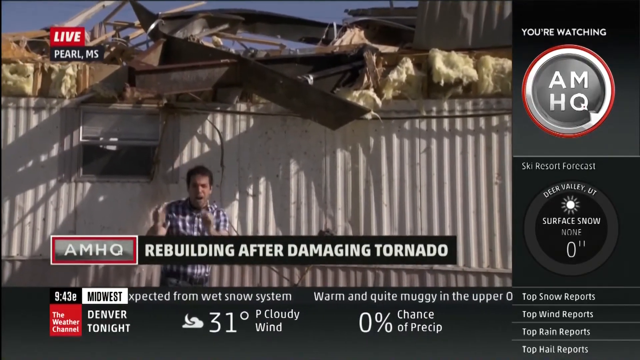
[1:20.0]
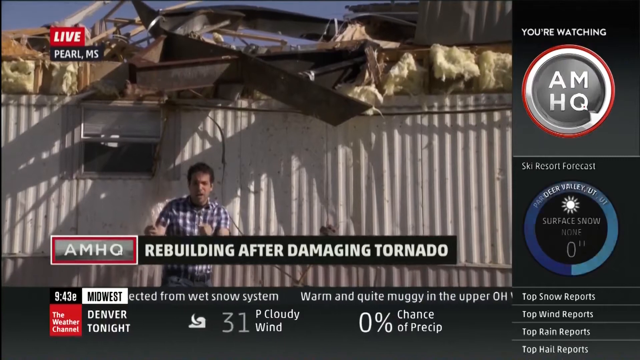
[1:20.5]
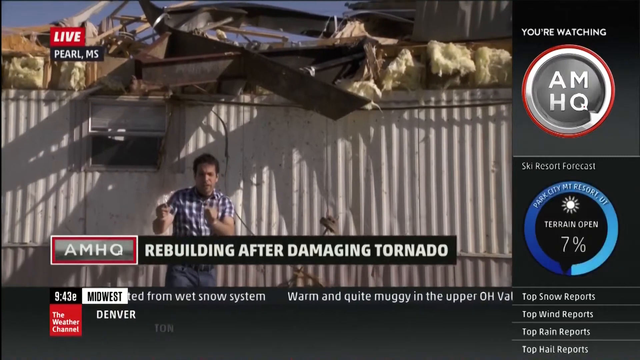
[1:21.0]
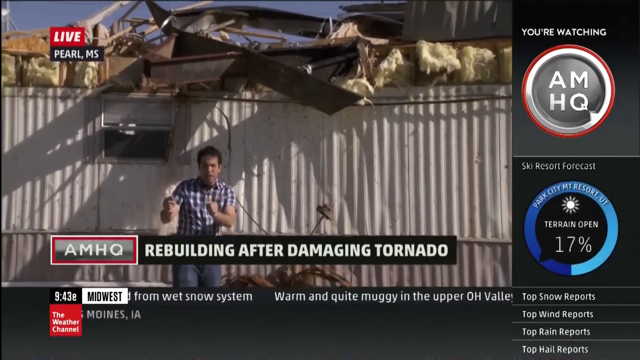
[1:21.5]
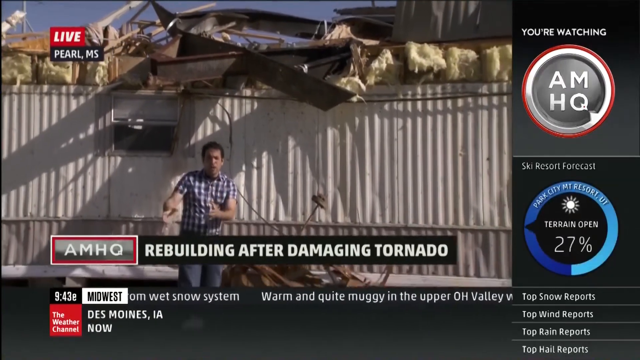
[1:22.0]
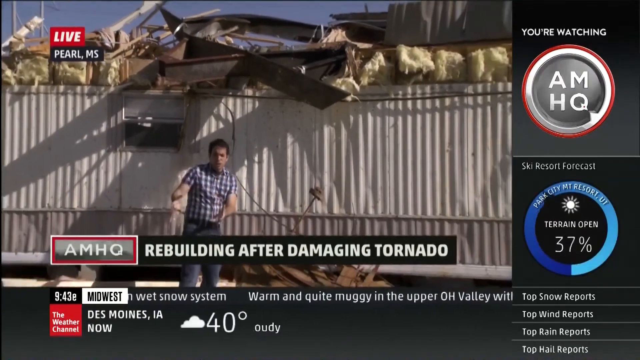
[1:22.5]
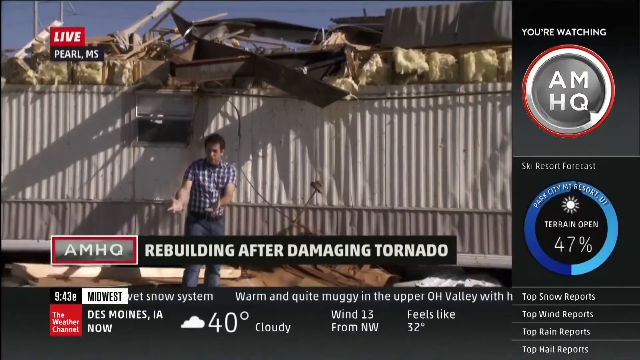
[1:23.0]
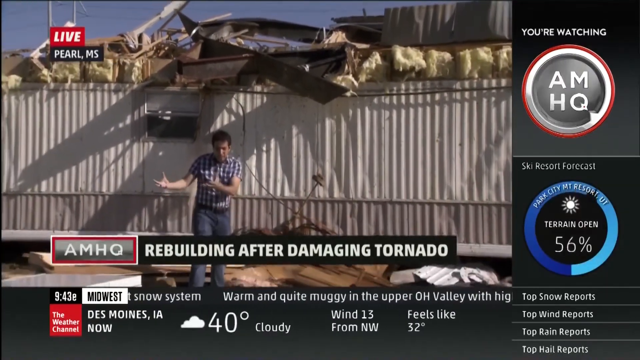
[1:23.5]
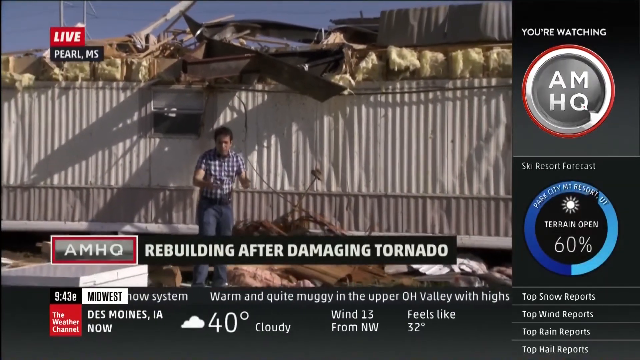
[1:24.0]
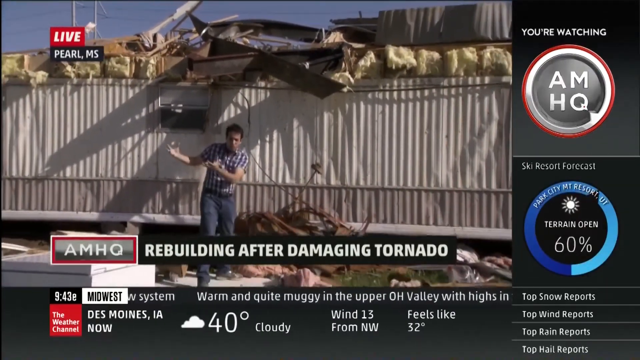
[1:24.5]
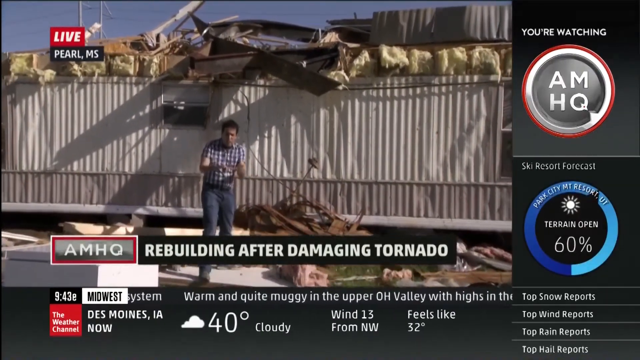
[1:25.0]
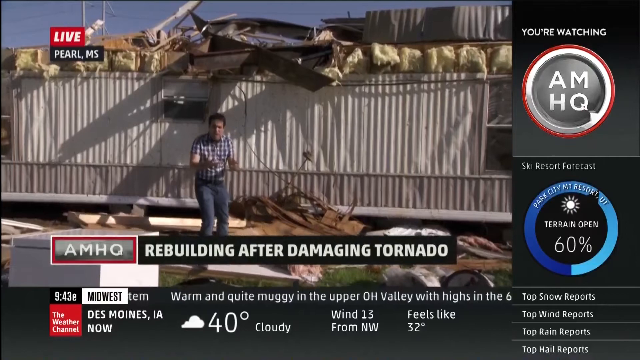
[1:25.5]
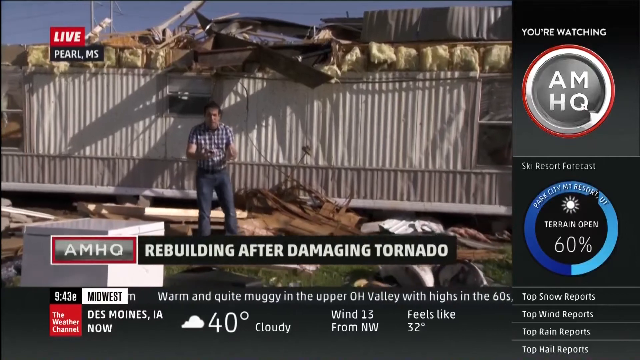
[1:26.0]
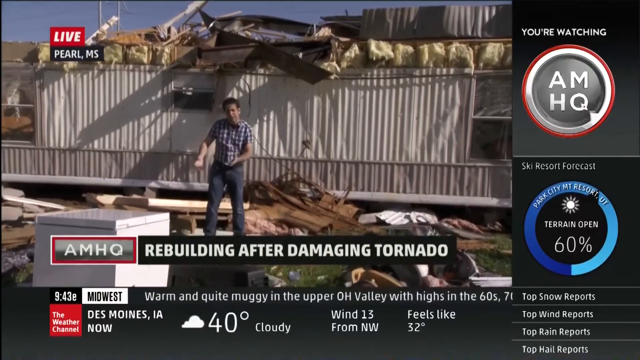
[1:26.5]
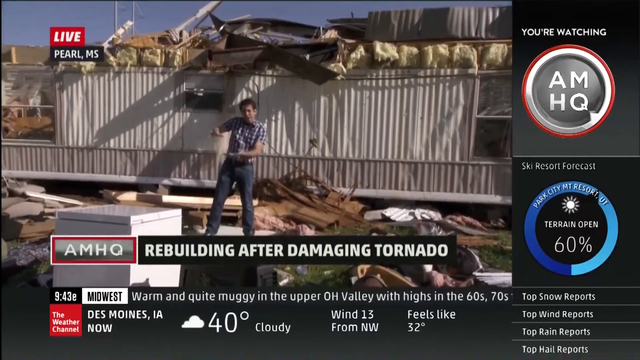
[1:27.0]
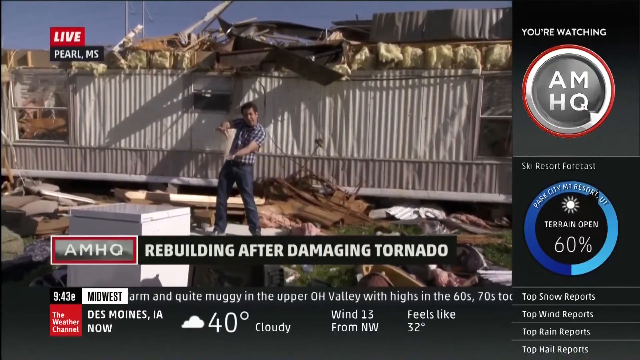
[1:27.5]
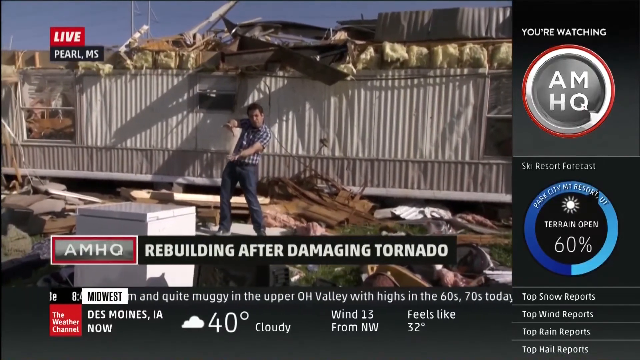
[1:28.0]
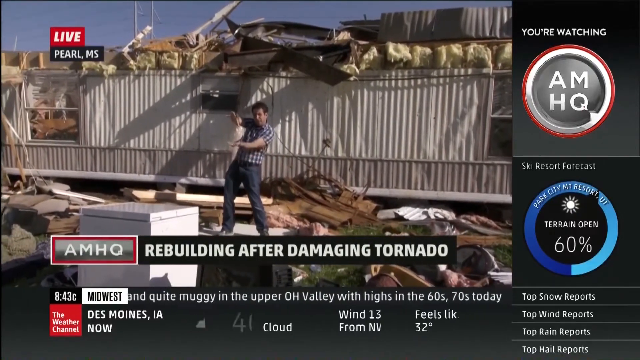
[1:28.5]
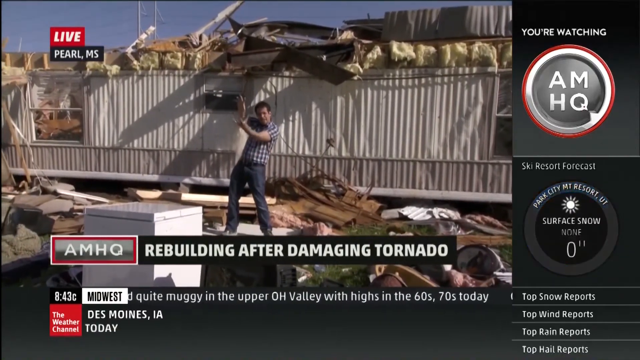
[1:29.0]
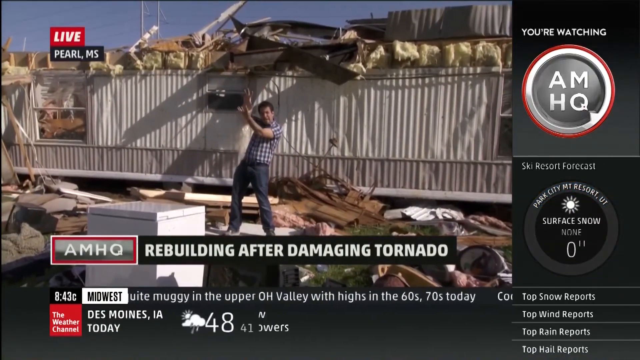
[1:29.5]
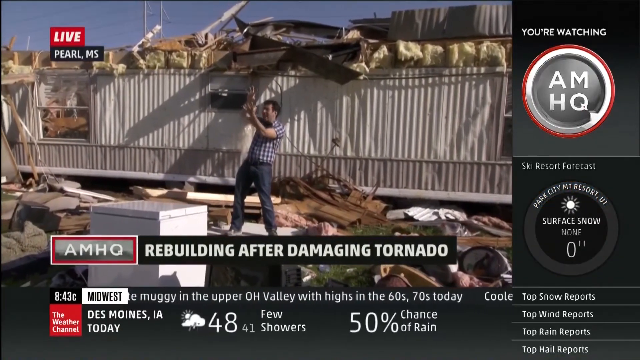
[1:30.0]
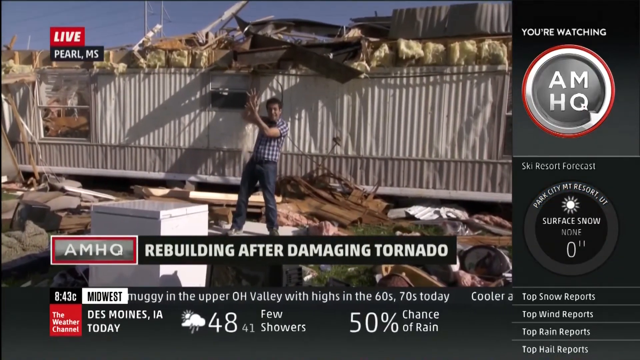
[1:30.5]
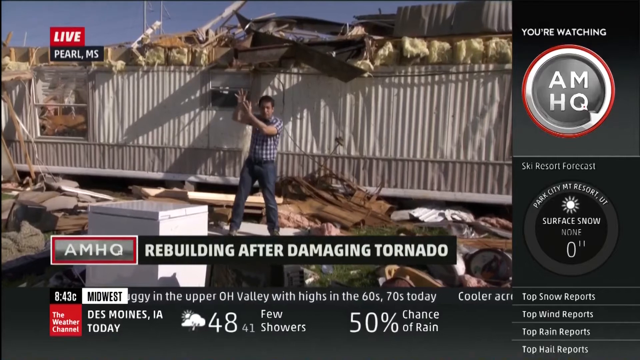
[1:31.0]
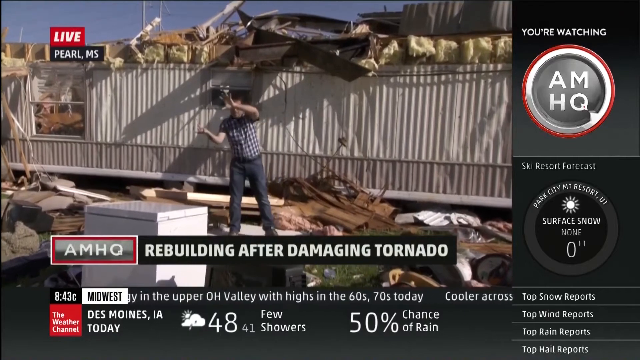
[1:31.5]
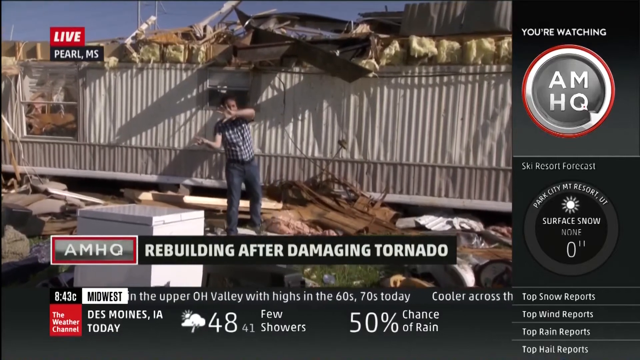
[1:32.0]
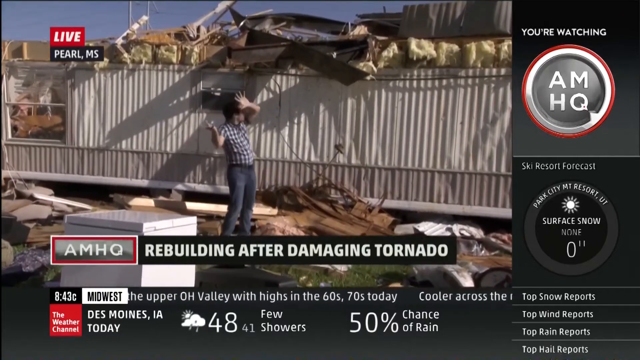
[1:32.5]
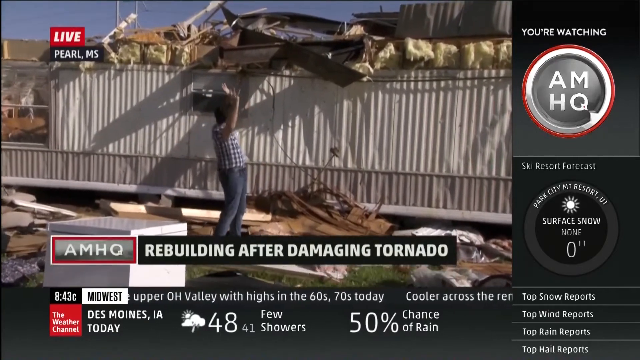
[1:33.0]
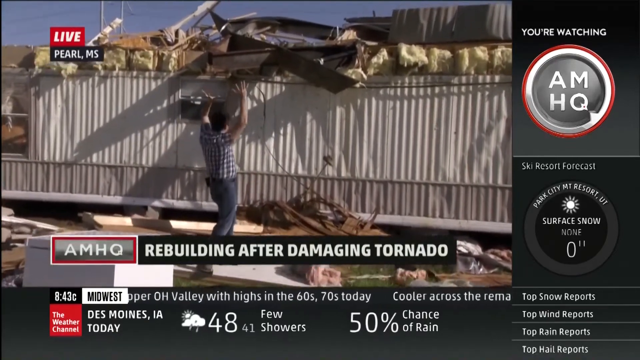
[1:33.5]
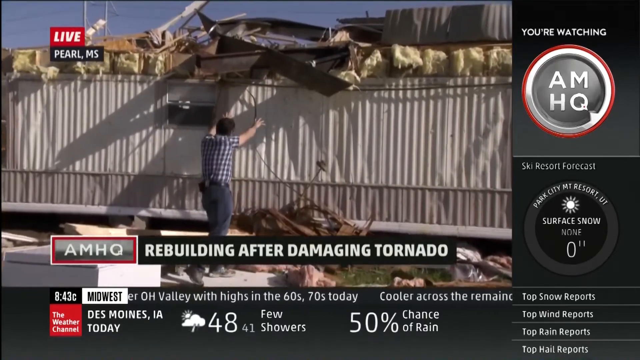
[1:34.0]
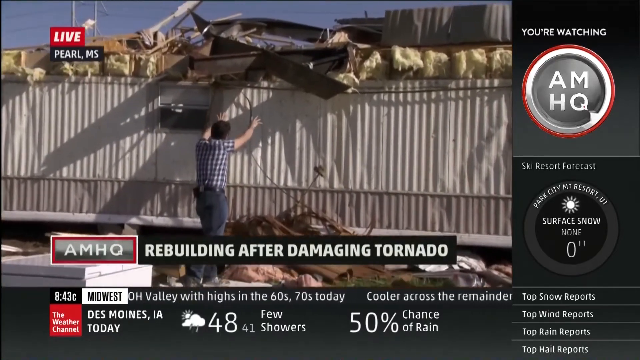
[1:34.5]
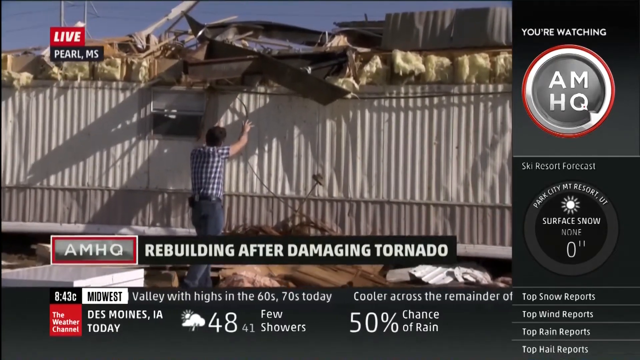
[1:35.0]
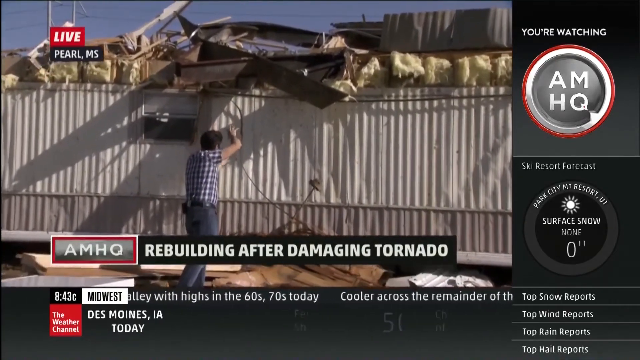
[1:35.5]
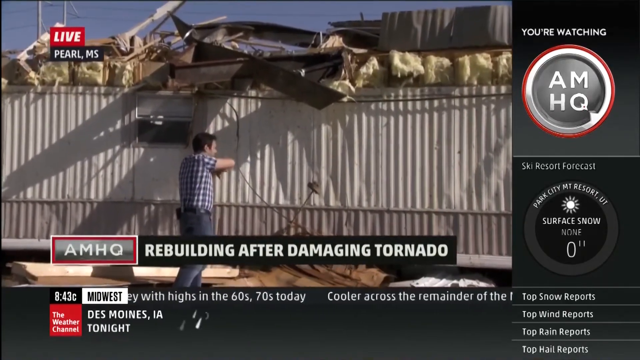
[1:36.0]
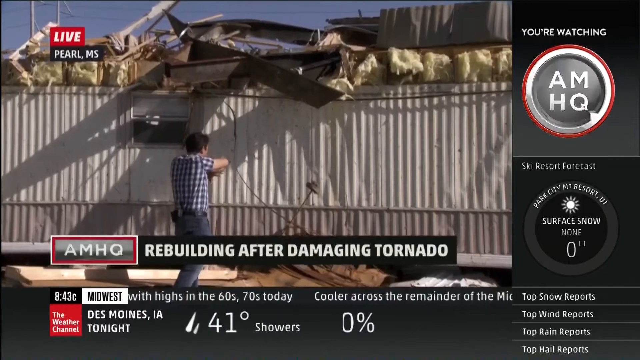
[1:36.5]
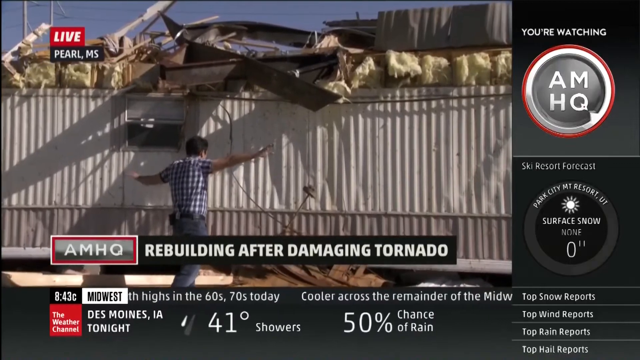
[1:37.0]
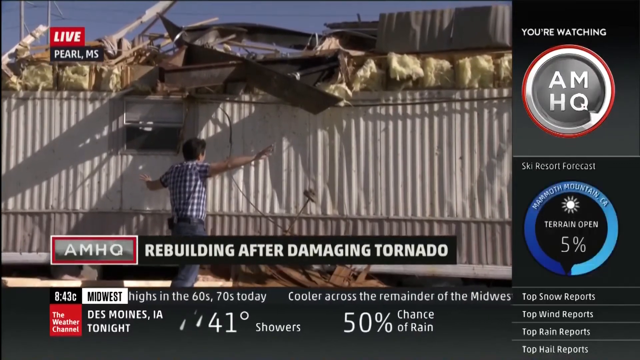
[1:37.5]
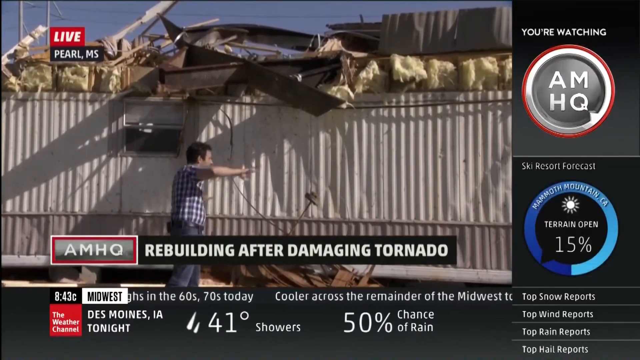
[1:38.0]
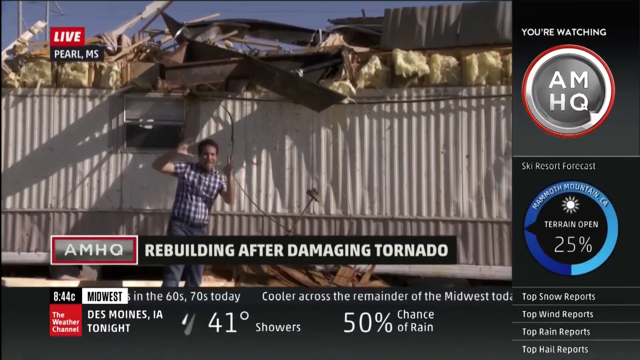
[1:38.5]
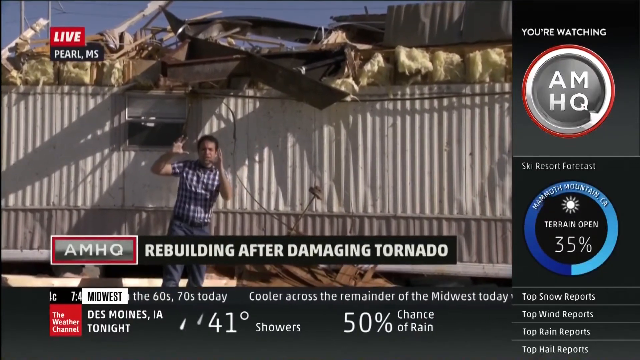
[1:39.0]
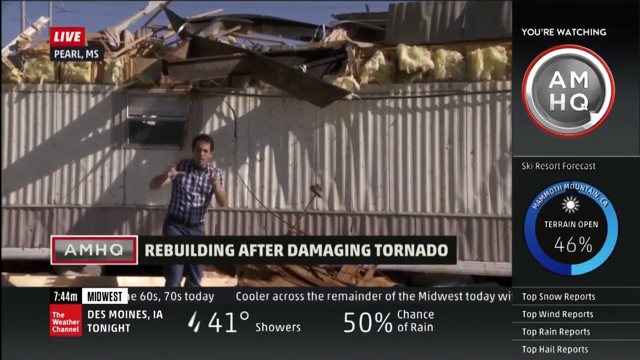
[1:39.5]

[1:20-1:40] David continues demonstrating, showing with his movements how the tornado lifted things and moved items against the wall. Around him everything is messed up, with so much damage that it is hard to recognize what things are or where they belong. The broadcast is live news from AMHQ.